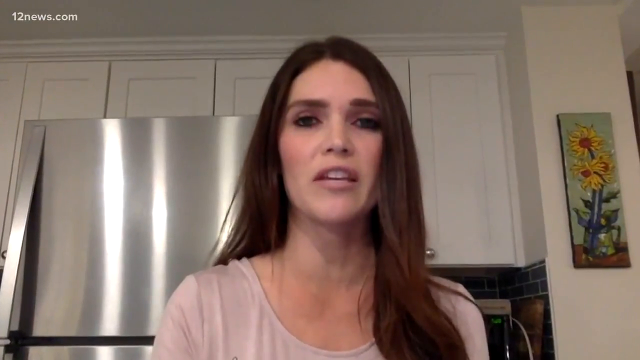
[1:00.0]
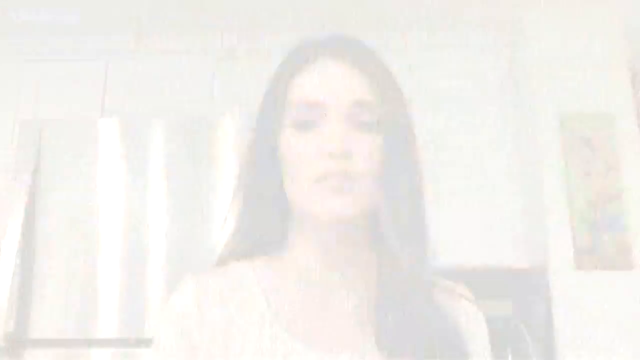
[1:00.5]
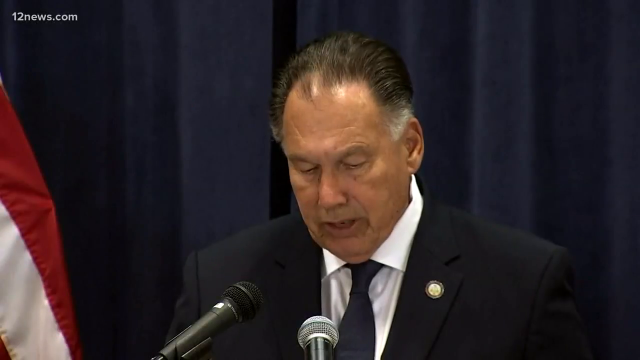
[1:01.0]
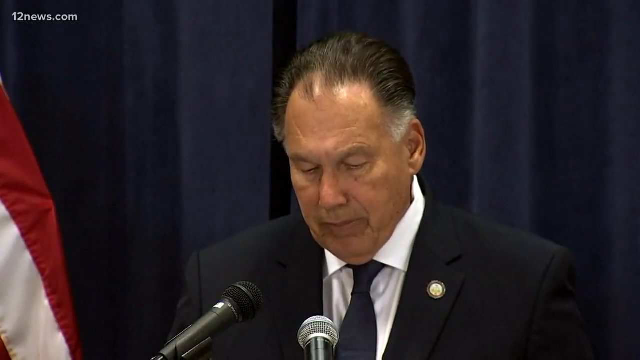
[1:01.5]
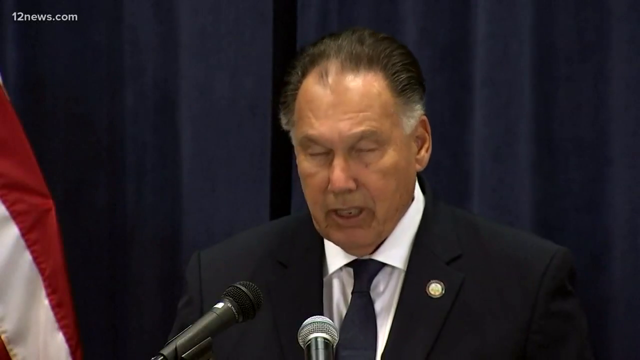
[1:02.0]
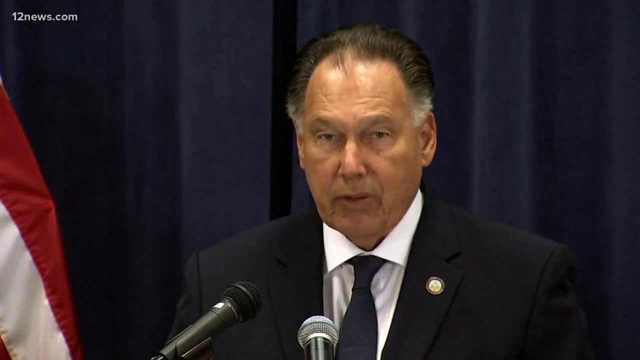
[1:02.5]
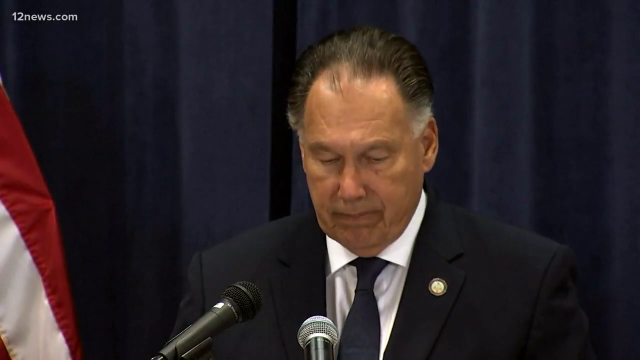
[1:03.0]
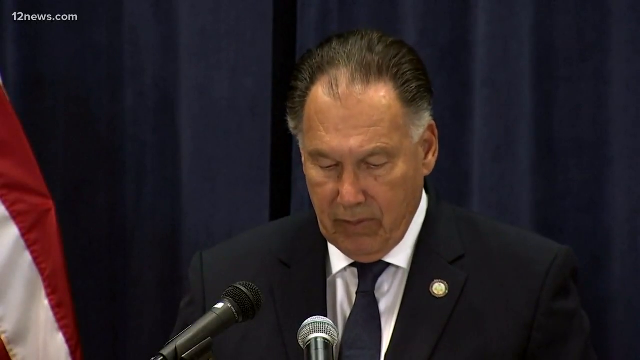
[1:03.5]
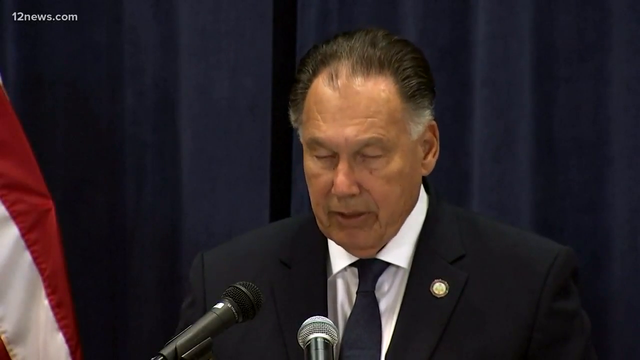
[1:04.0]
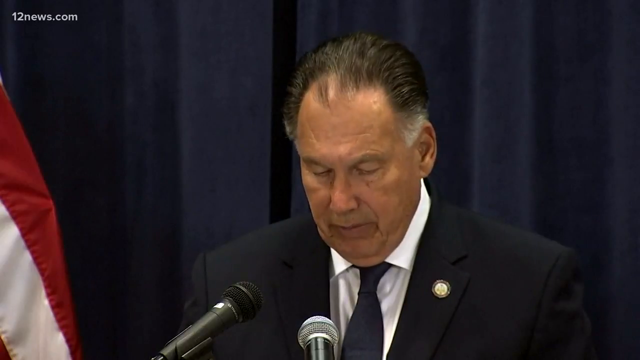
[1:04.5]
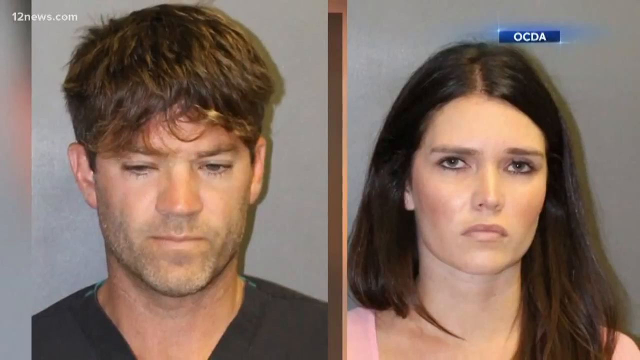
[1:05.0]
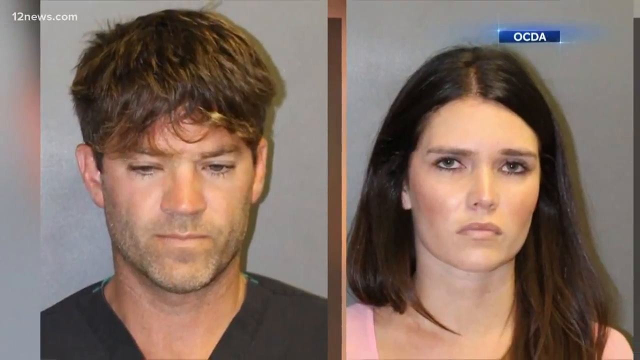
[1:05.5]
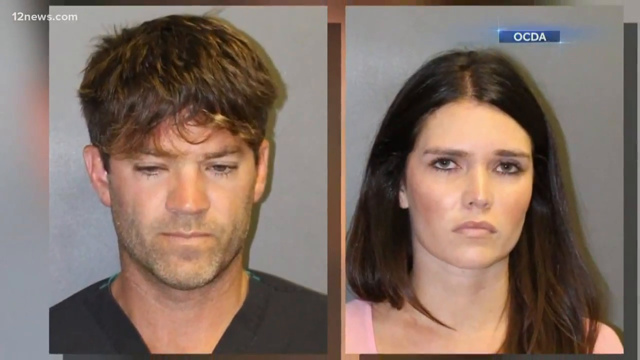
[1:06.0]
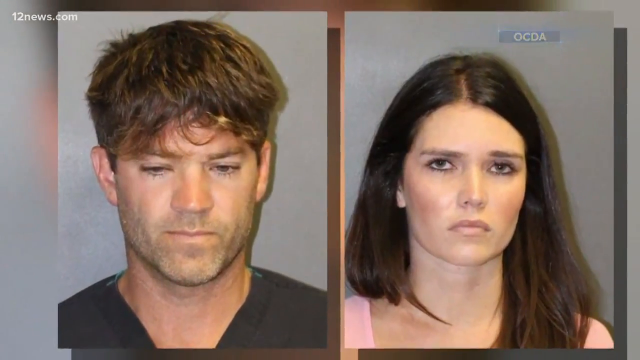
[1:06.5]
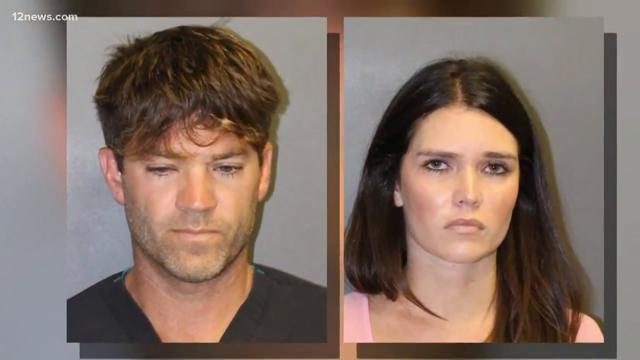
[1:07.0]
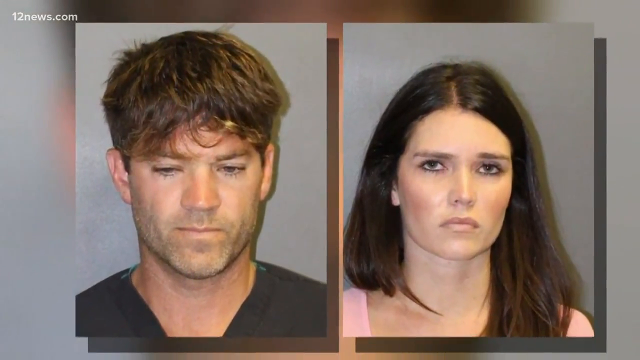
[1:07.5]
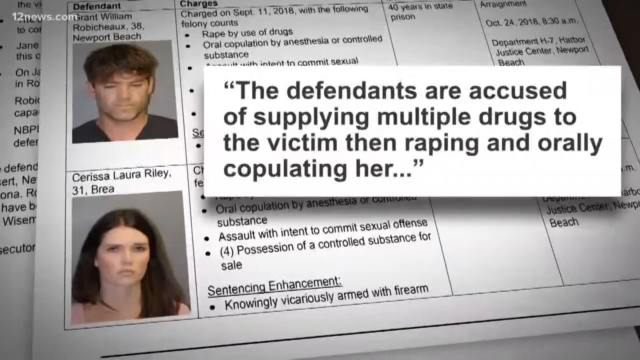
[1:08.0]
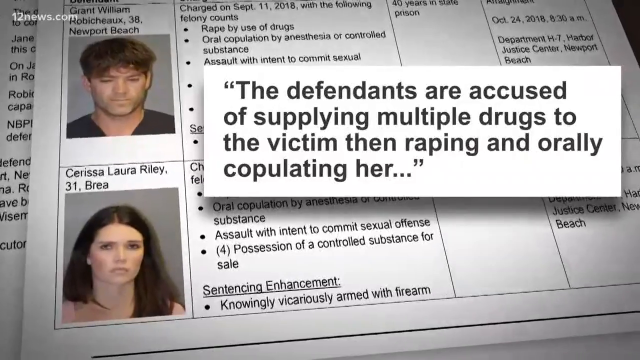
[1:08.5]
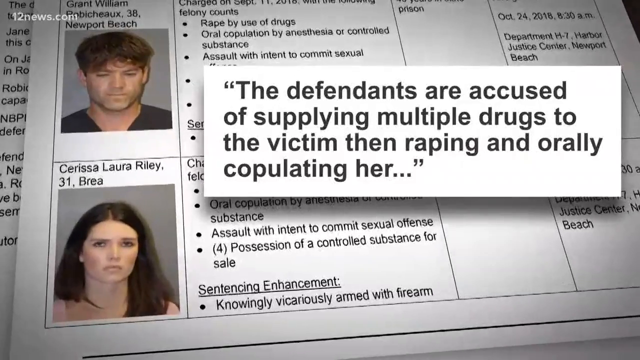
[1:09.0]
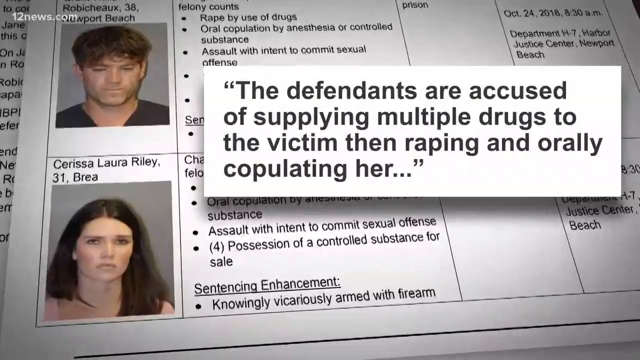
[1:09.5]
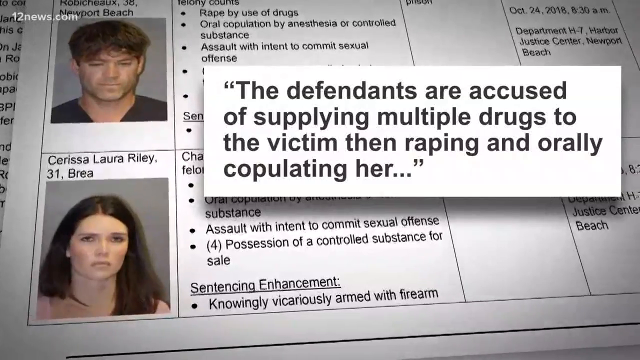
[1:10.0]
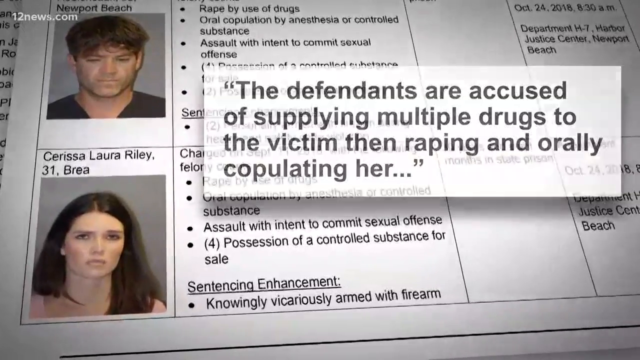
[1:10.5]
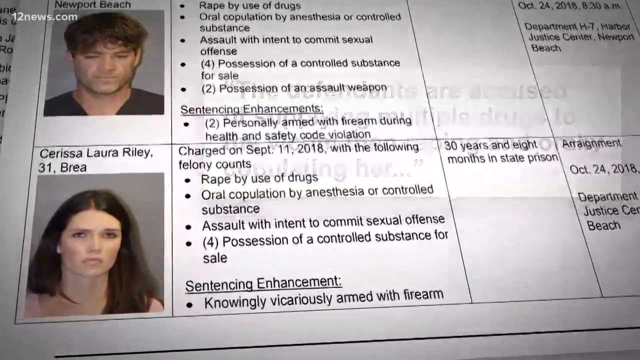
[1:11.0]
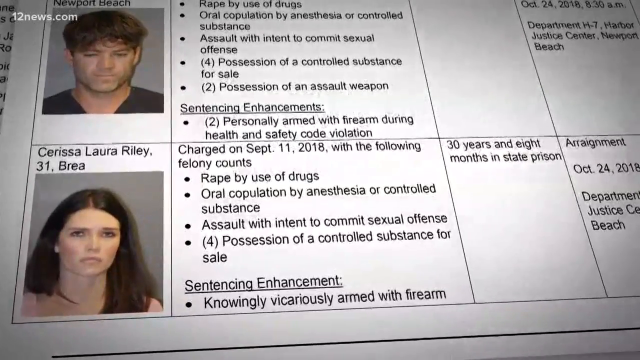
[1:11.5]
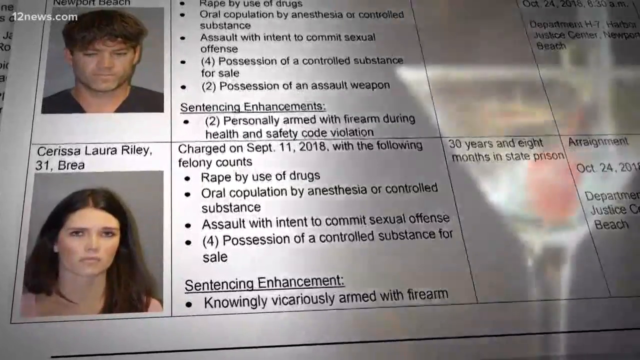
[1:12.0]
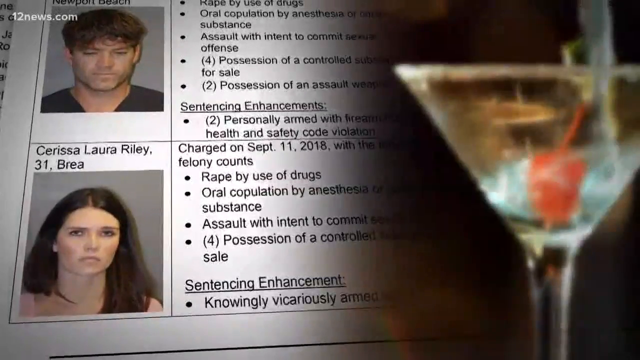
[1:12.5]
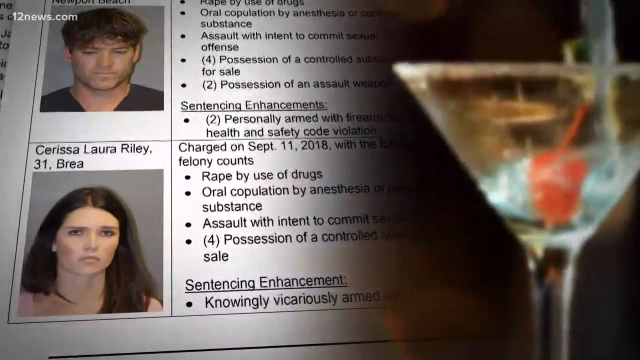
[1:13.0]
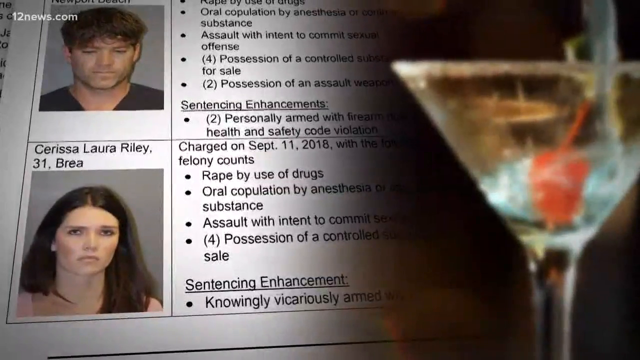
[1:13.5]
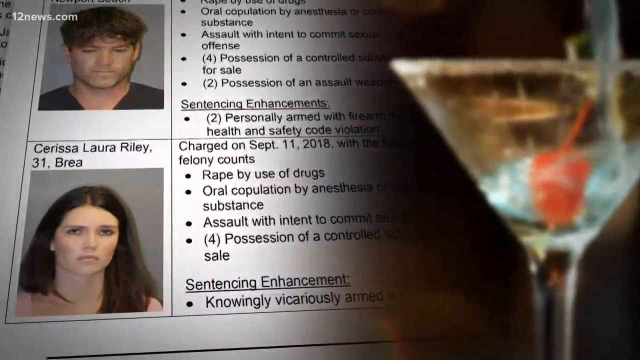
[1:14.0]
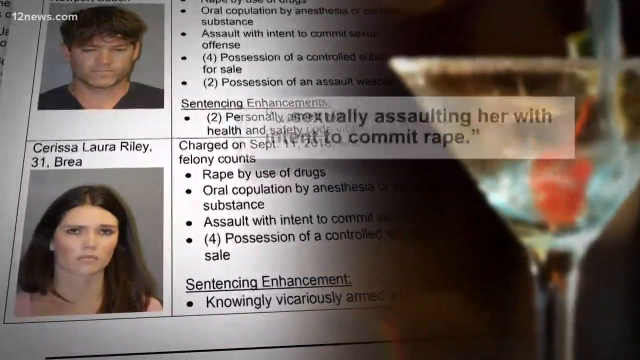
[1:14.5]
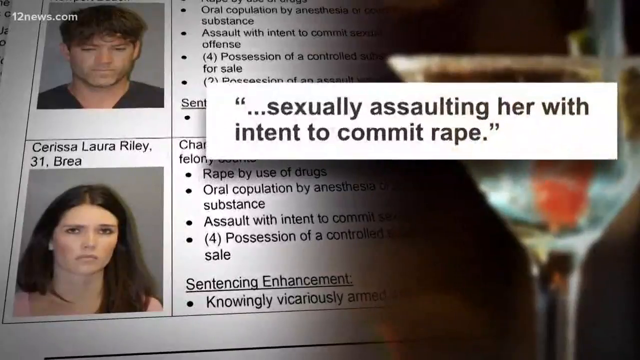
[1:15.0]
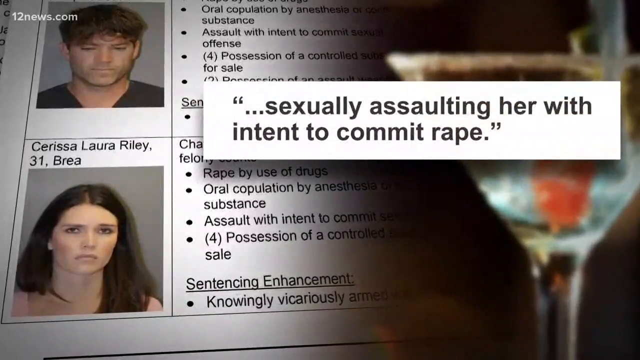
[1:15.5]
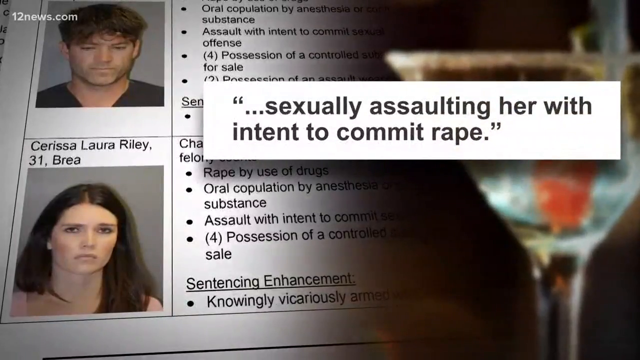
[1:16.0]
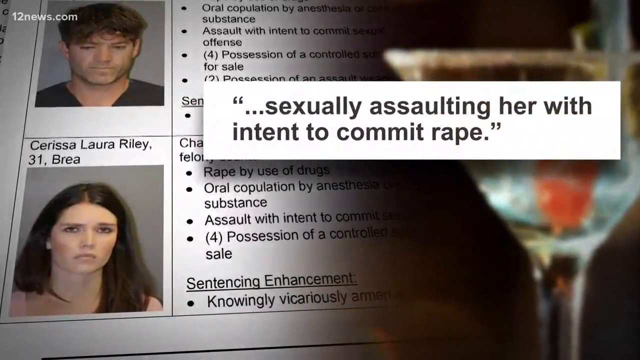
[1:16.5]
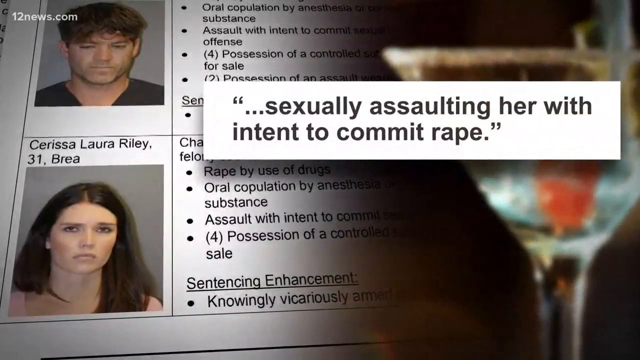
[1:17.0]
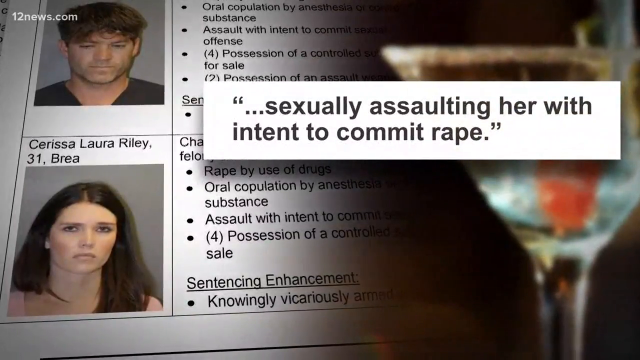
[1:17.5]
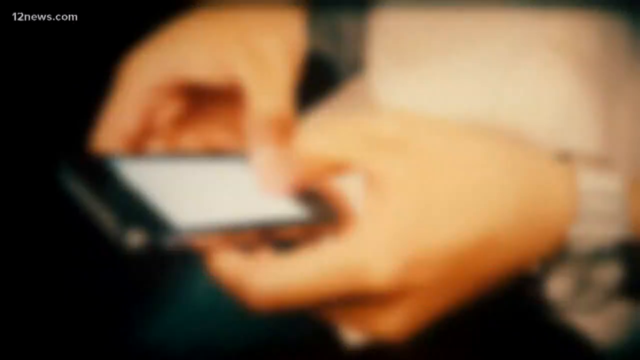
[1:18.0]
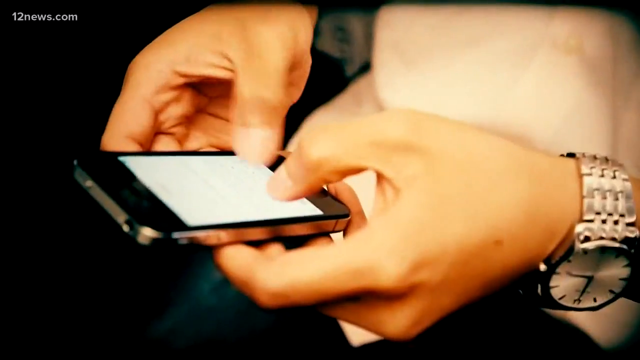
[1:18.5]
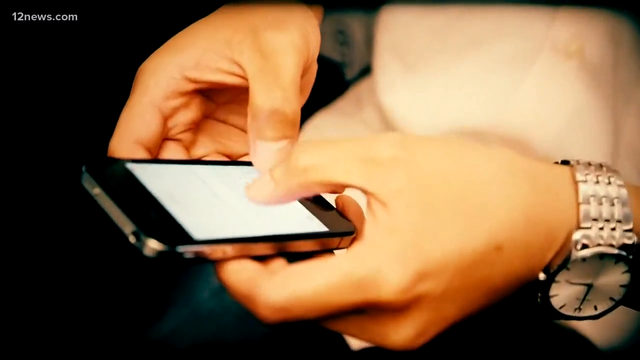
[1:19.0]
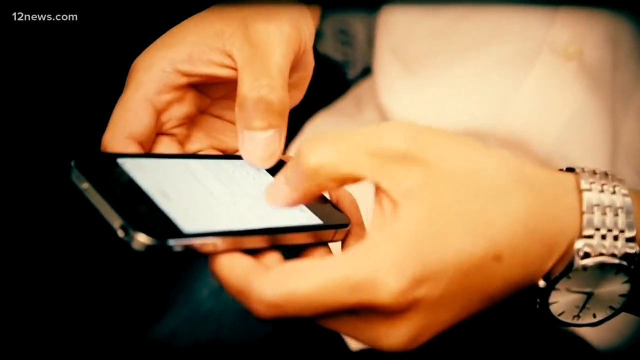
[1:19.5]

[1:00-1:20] The woman from the mug shot, wearing a pinkish white shirt, with hair of a kind of reddish color, talks into the camera. She is white. Behind her are a silver refrigerator, white cabinets, a green background, sunflowers in front, a picture on the wall to the right, and what looks like a coffee maker. An up-close shot shows a person who is either a governor or a senator or something similar, in a black suit, white shirt and bluish tie, with part of an American flag on the left side and blue curtains behind him. There is a microphone. He speaks to the camera and reads something. The mug shots are shown again, the woman on the right and the man on the left, with a shadow on the man; the woman's hair now looks brown. "OCBA" is in the top right corner. They are shown as defendants in a case: their mug shots appear in what looks like a newspaper or paper version, with a highlighted part in black letters on a white background reading "The defendants are accused of supplying multiple drugs to the victim, then raping". A wine glass pops up.